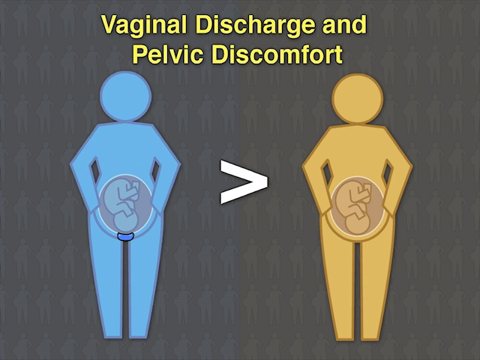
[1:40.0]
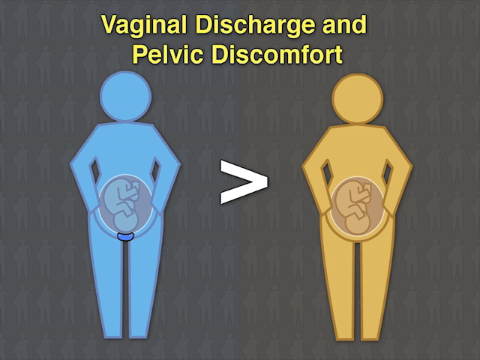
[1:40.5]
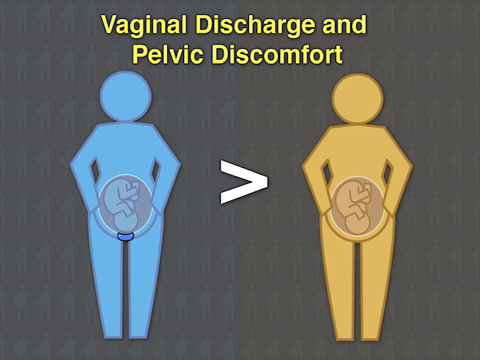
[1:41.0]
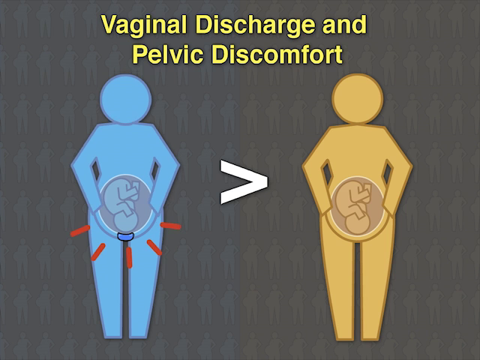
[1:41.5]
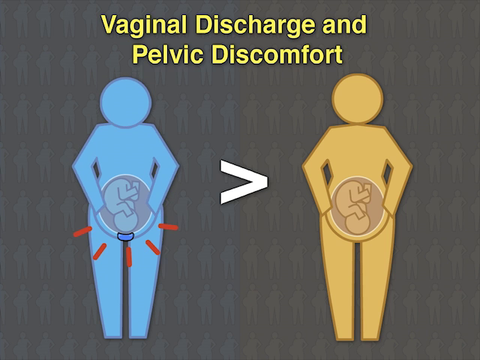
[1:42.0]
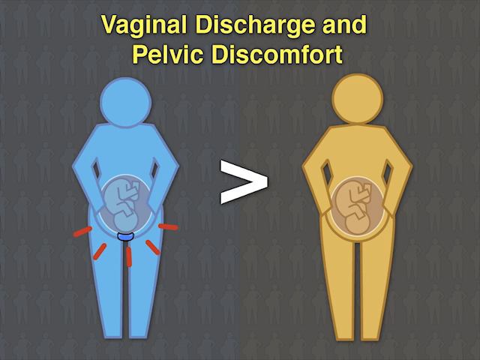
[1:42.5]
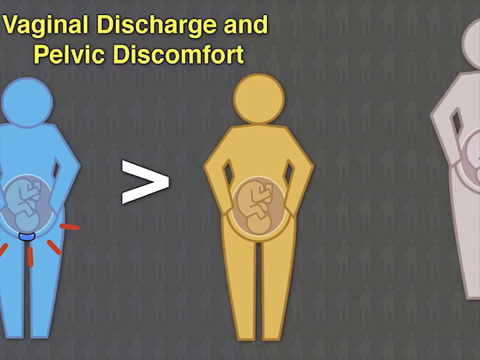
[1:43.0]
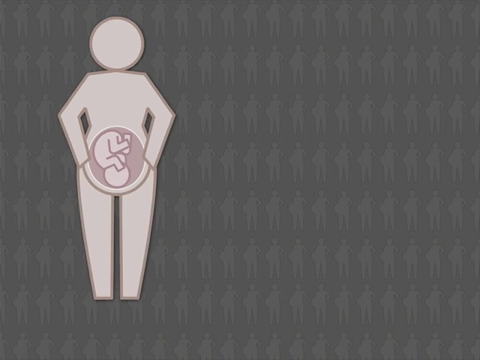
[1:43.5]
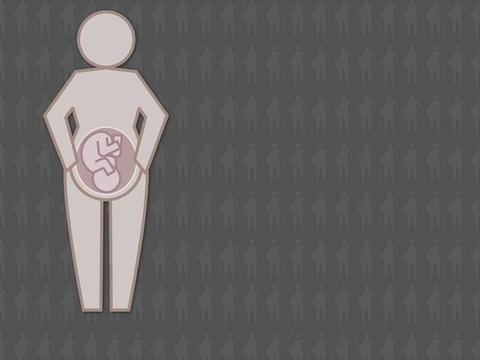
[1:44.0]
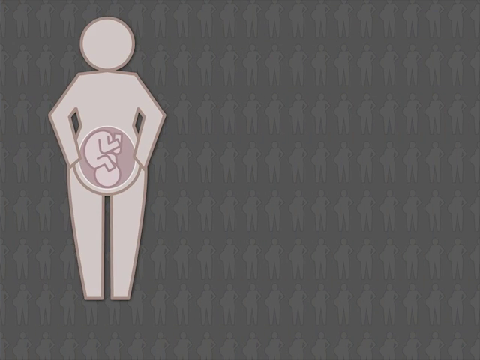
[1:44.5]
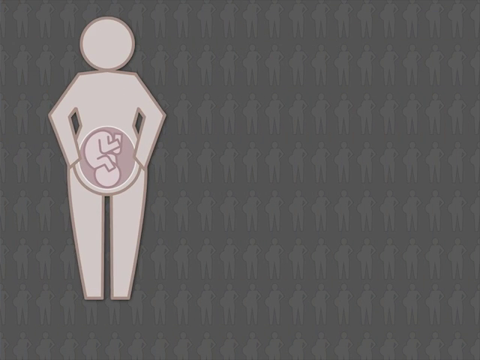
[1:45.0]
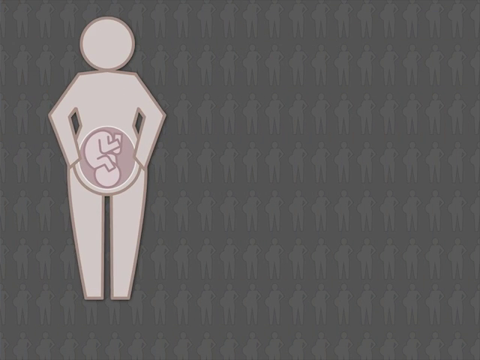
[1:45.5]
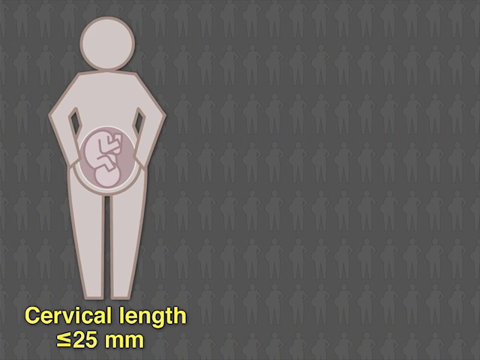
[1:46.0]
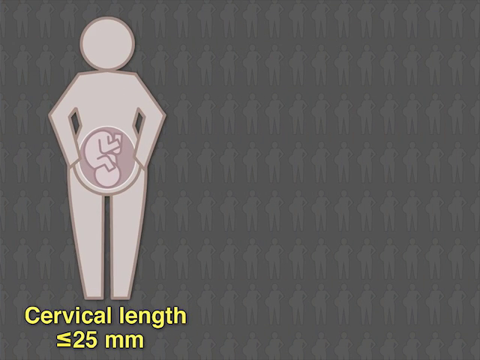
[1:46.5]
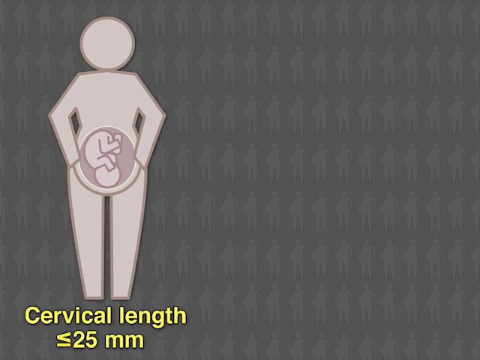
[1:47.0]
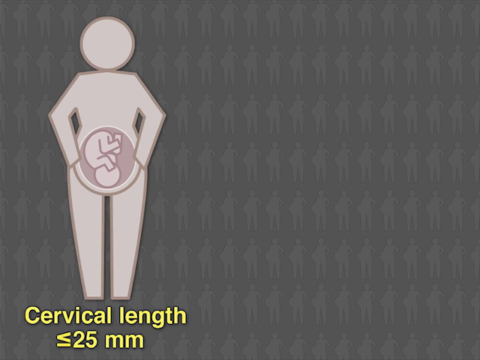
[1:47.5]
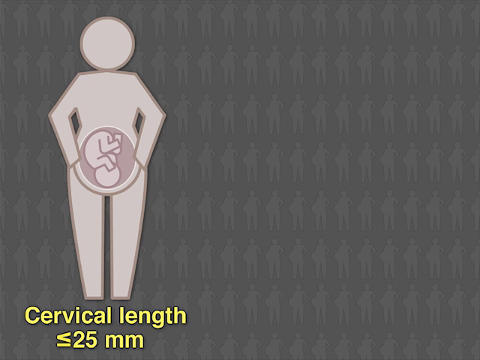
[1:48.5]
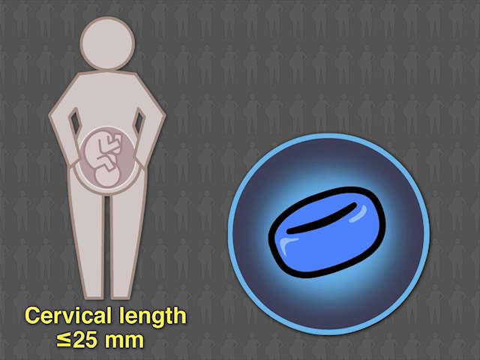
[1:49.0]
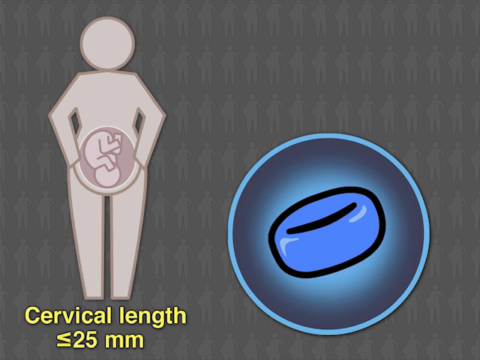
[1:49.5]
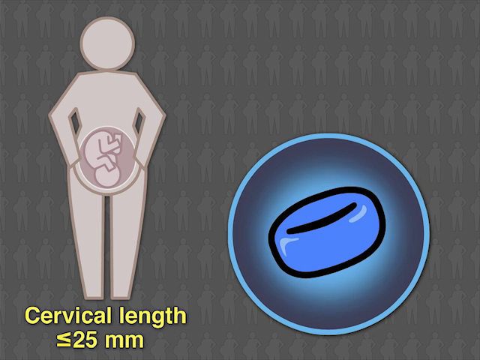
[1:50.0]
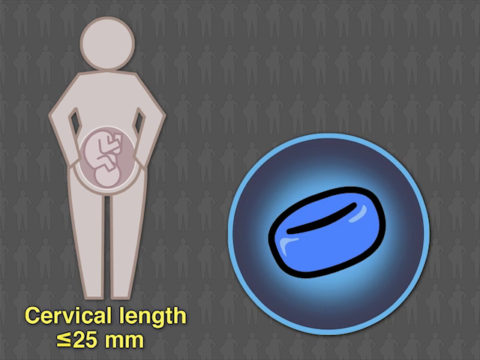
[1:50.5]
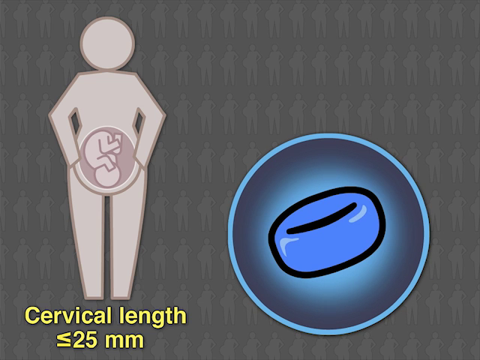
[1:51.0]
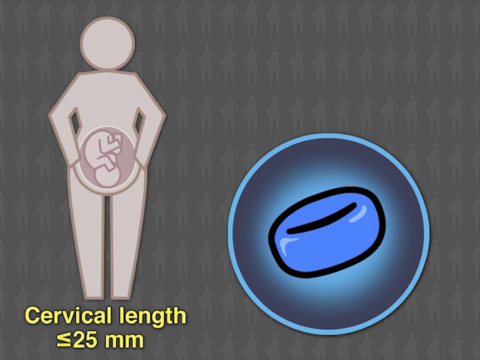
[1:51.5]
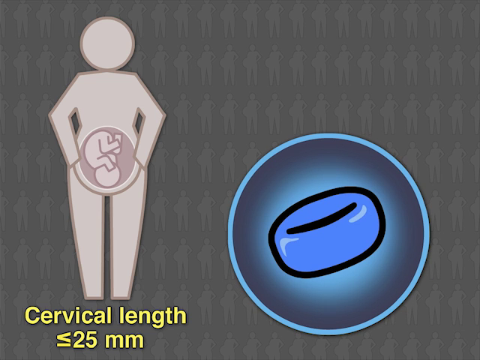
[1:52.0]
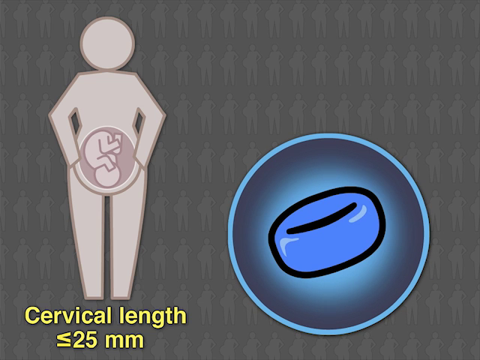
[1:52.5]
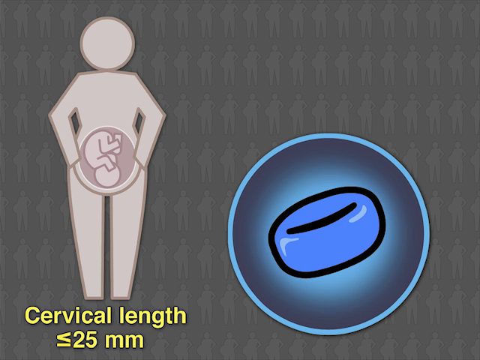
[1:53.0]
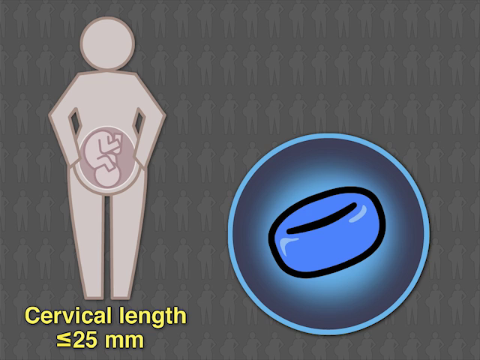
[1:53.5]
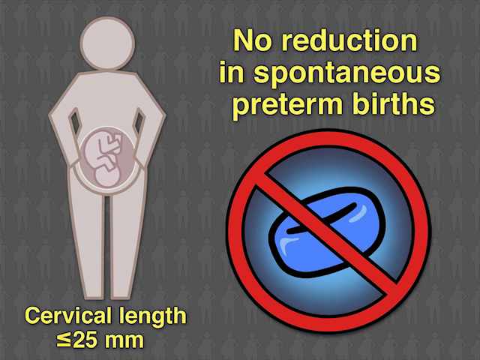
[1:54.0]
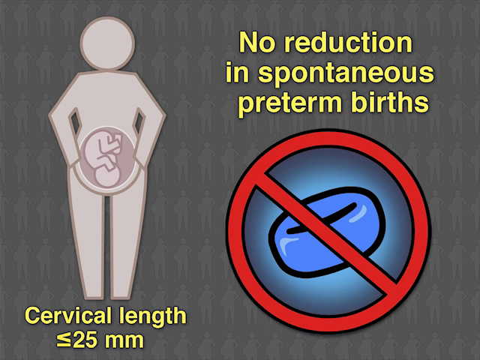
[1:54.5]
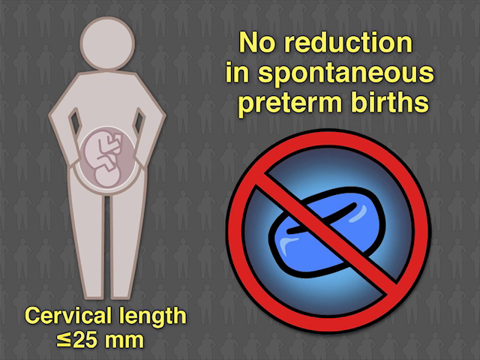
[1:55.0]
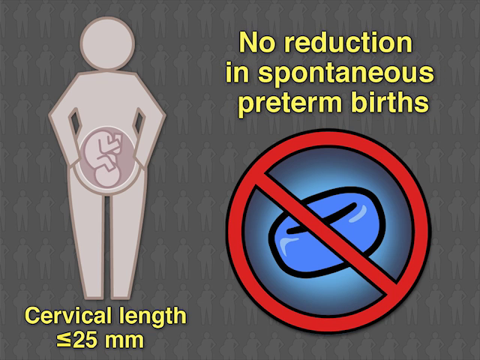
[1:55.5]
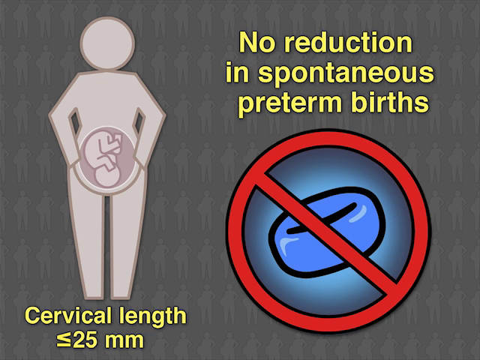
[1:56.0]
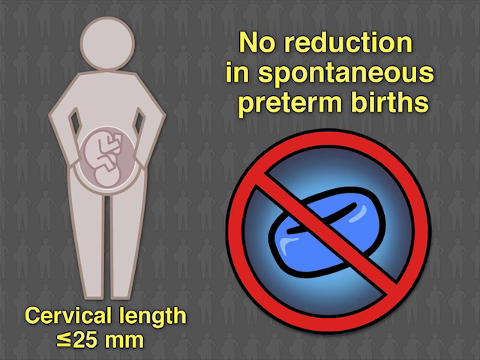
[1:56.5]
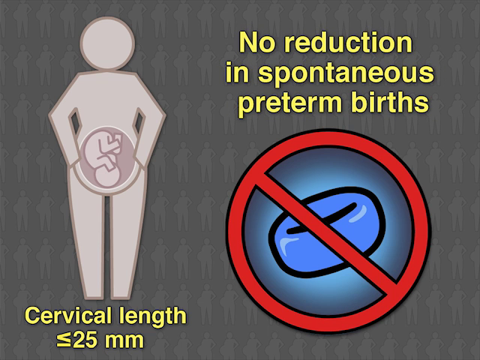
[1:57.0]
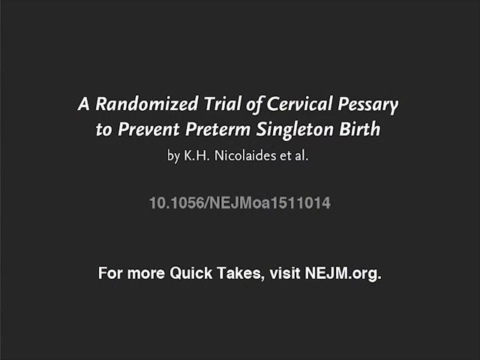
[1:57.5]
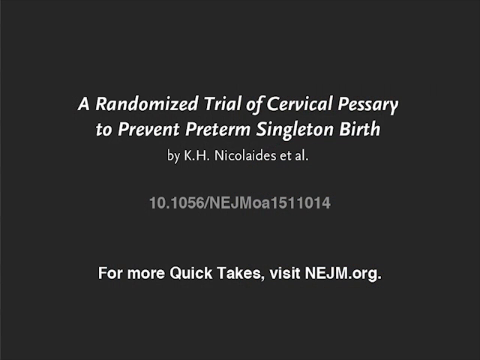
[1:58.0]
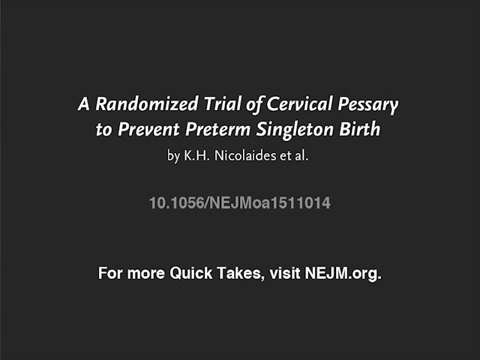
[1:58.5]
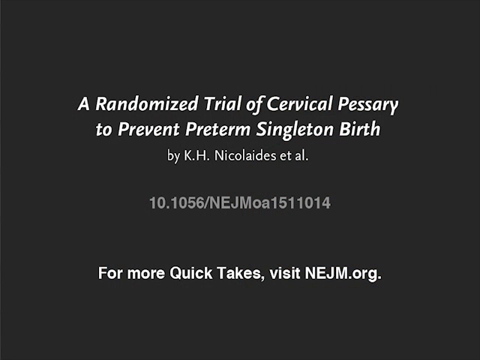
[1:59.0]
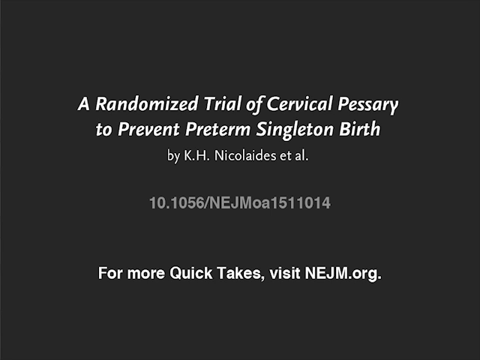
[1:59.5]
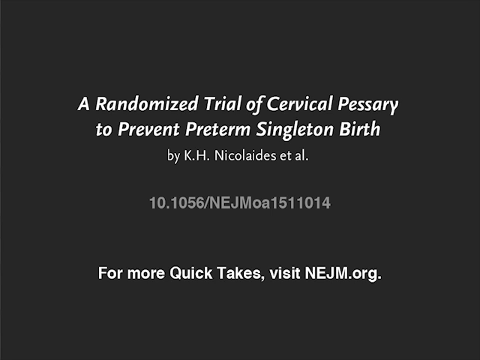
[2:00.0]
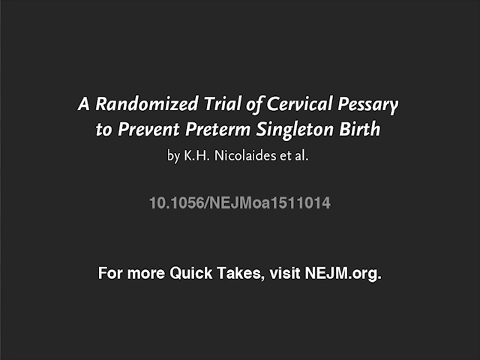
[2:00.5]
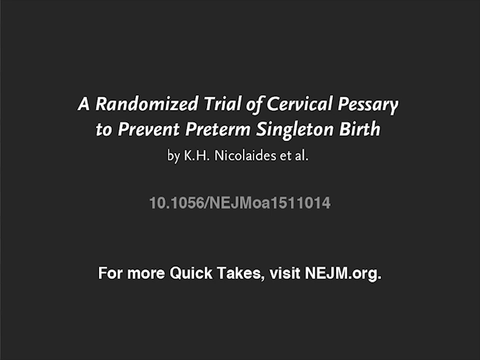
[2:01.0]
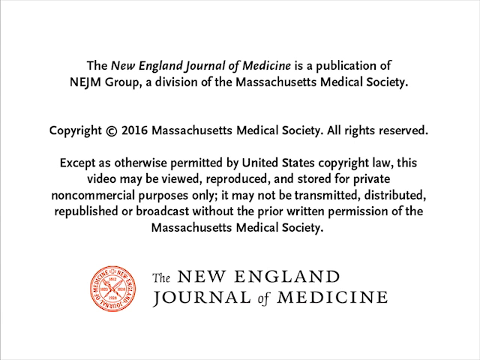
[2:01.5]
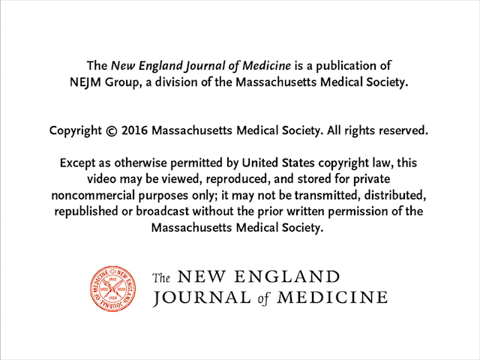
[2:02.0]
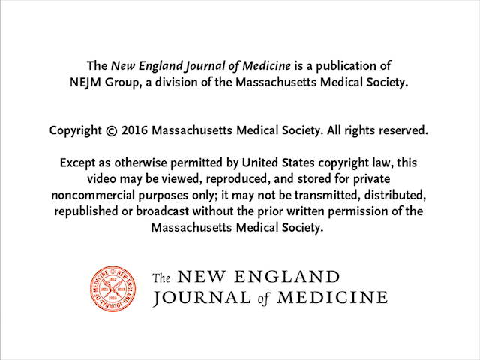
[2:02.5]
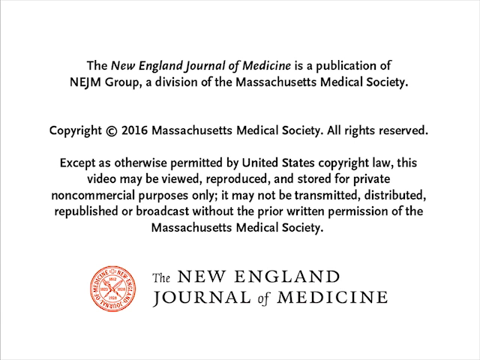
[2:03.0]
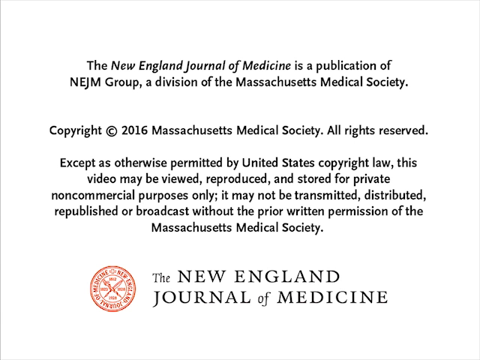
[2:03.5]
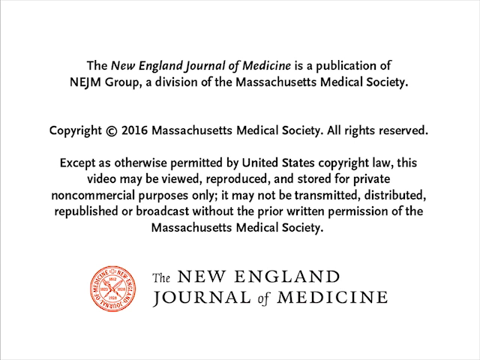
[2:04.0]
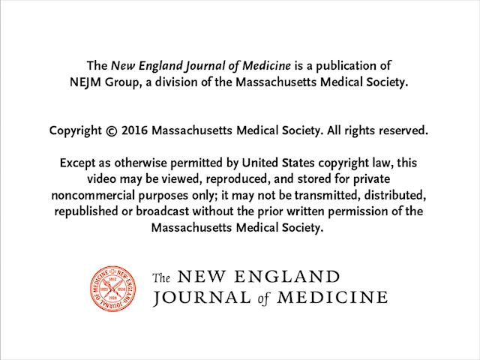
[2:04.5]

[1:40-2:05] Two cutouts of women are on the left and right. The one on the left is blue and has a blue circle underneath her cervix. Both are pregnant, with the baby facing downward, and there is a greater than sign between them. Text at the top reads "vaginal discharge and pelvic discomfort". The woman in blue kind of hunches over, and some orange lines come out of the baby, looking as if she is in pain. Both start shifting toward the left, and from the right another woman appears in a different, more pink color. Text appears at the bottom reading "Cervical Length". A circle then appears with a blue ring in its side. Text at the top reads "no reduction in spontaneous pre-term births", and the blue ring has a red circle around it with a red line through it, crossing it out. Details at the bottom read "a randomized trial of cervical pessary to prevent preterm singleton birth", along with the author's name and more information, including a website address. A final screen comes up with a white background and a lot of black text about what the New England Journal of Medicine is and its copyright.